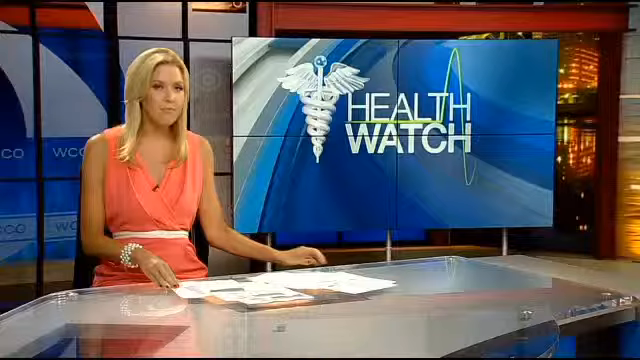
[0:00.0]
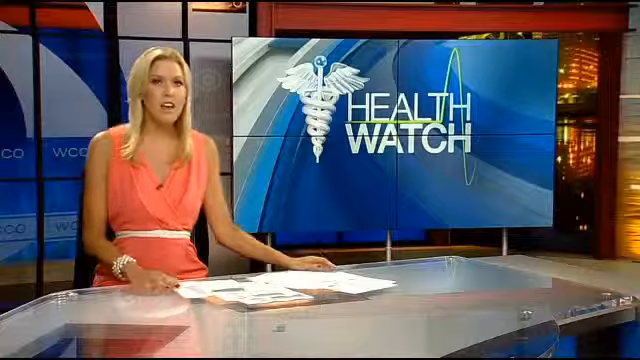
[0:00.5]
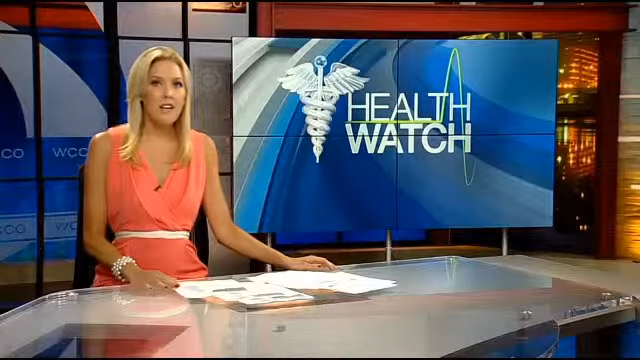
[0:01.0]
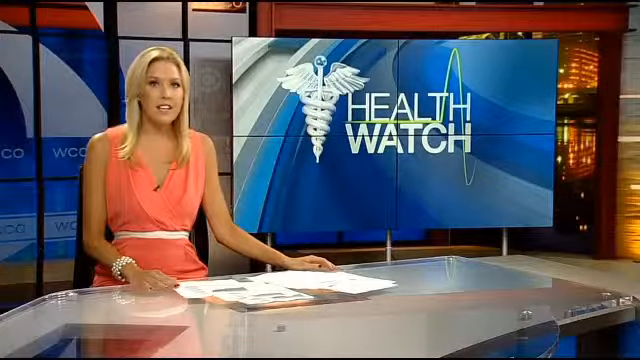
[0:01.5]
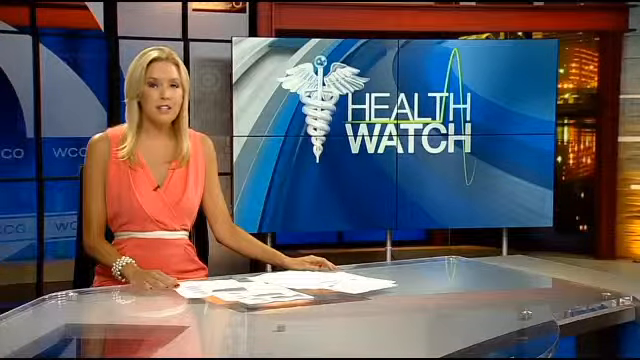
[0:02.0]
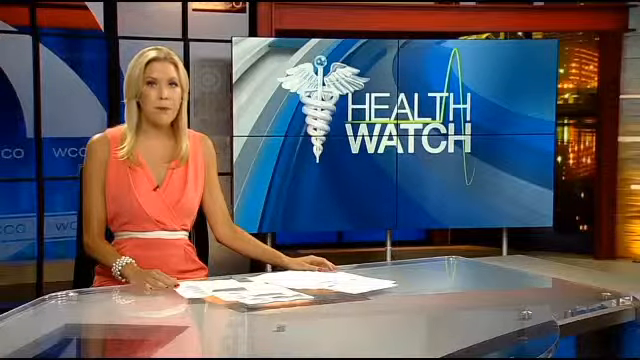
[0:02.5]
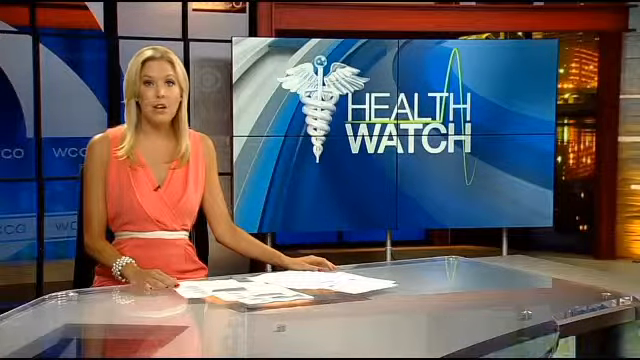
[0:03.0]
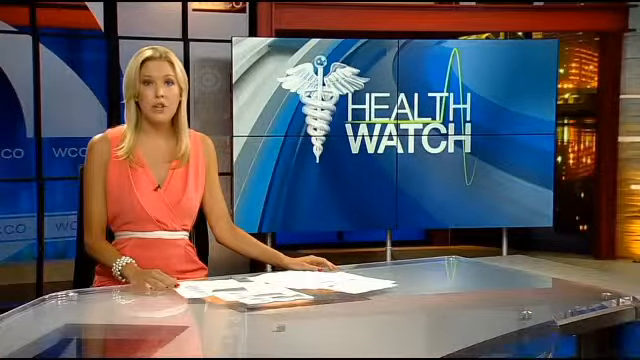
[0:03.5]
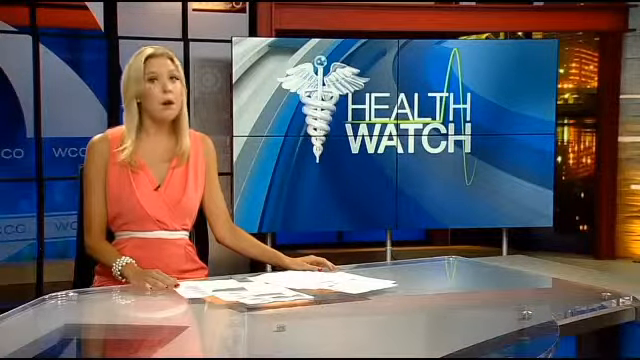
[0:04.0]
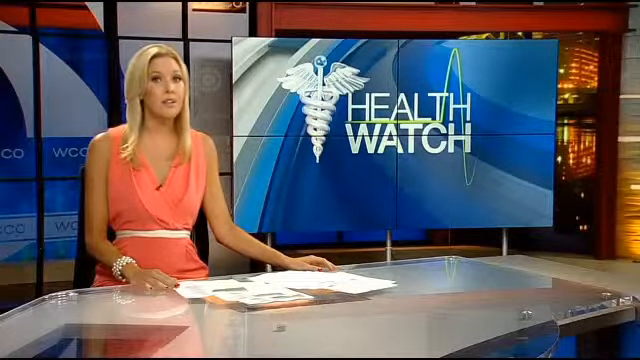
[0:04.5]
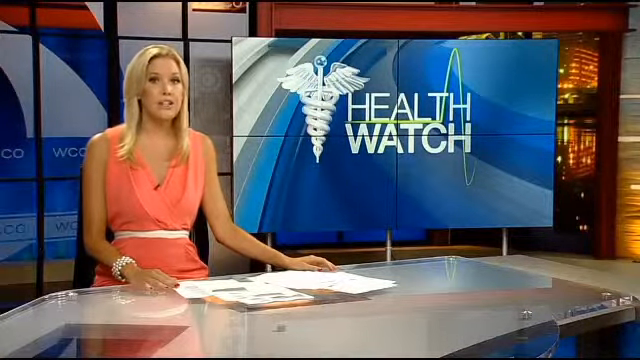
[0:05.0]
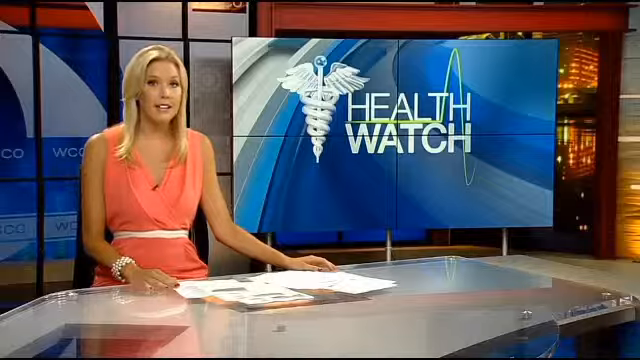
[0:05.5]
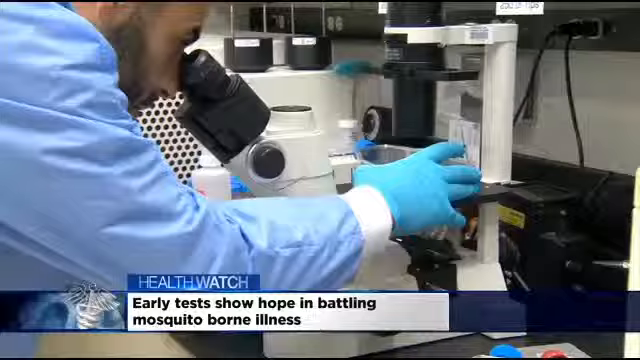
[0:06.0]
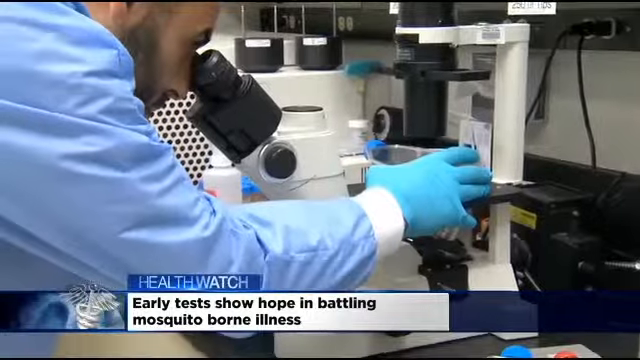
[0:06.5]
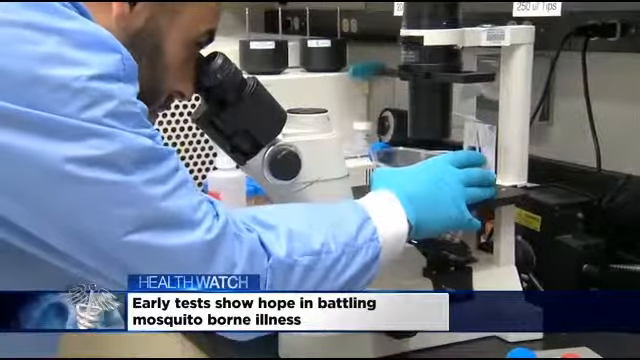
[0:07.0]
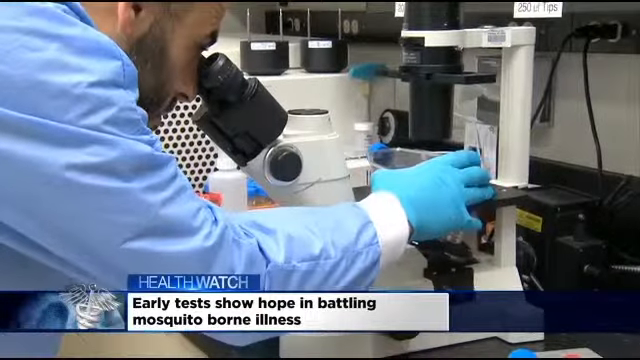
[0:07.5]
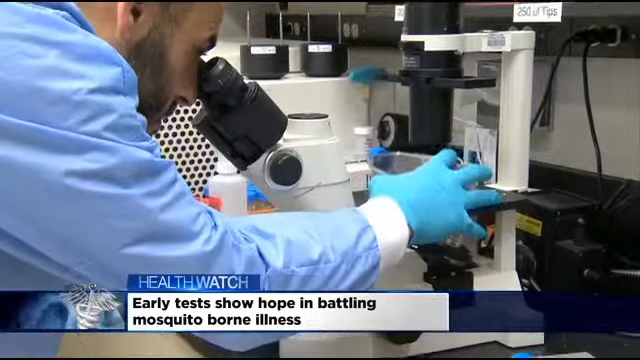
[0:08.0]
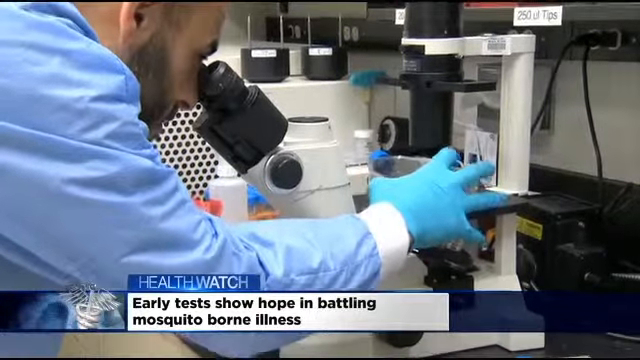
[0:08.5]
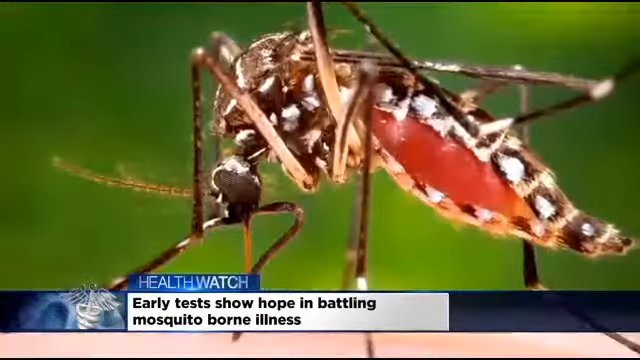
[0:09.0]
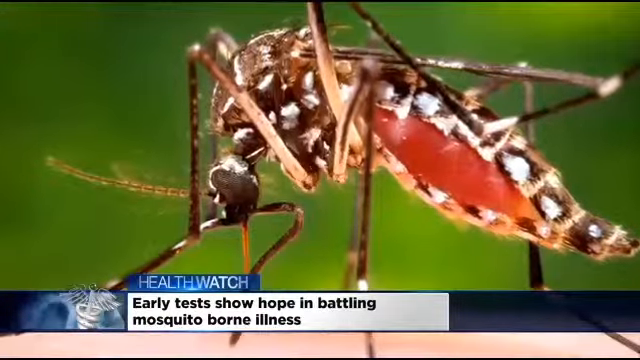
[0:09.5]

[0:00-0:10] In a newsroom, a blonde woman, probably in her thirties, sits at a desk with a bunch of papers in front of her. She is very skinny, and her long blonde hair goes about five or six inches past her shoulders. She wears a pink V-neck dress that leaves her shoulders exposed, a white belt, and a big white bracelet on her right hand, and her fingernails are painted. A screen behind her says "health watch." She speaks while looking directly at the camera. The scene switches to a lab where a man looks through a microscope; he appears to be probably in his forties, with five o'clock shadow stubble and very short hair that looks like it is receding. A picture of a mosquito is then shown, and the video switches back to the newswoman.